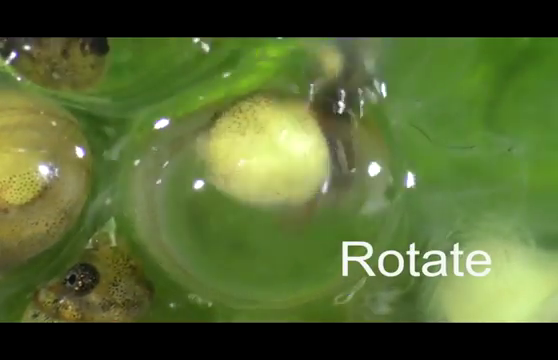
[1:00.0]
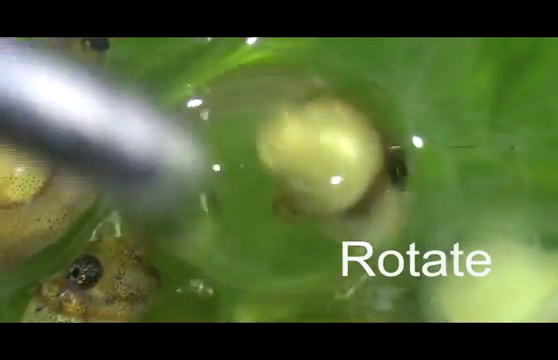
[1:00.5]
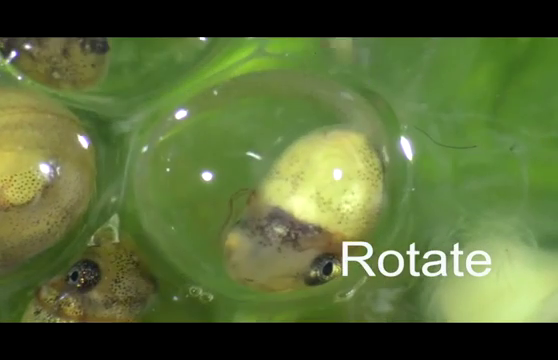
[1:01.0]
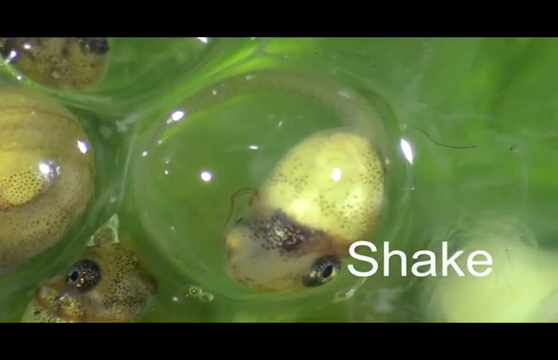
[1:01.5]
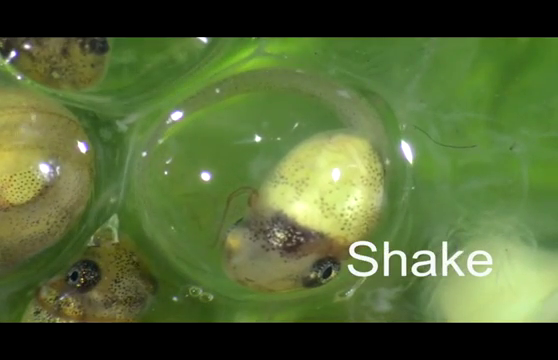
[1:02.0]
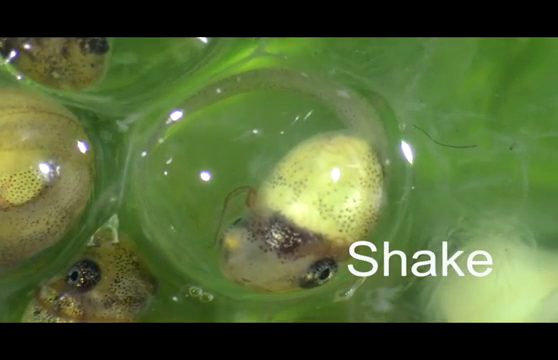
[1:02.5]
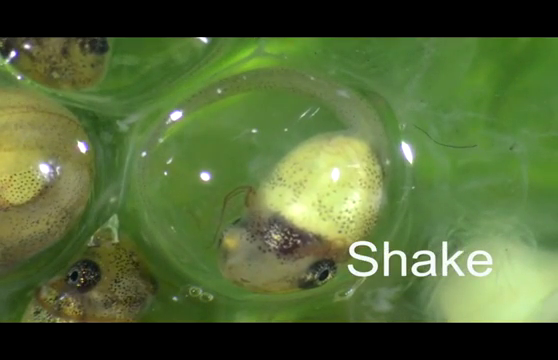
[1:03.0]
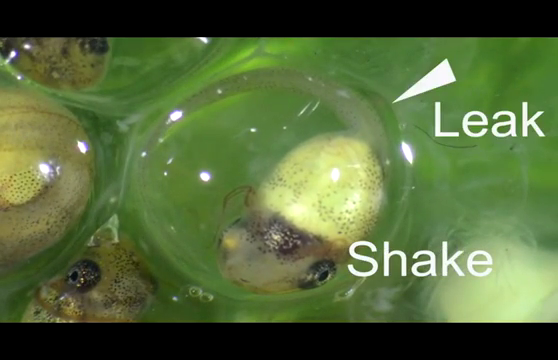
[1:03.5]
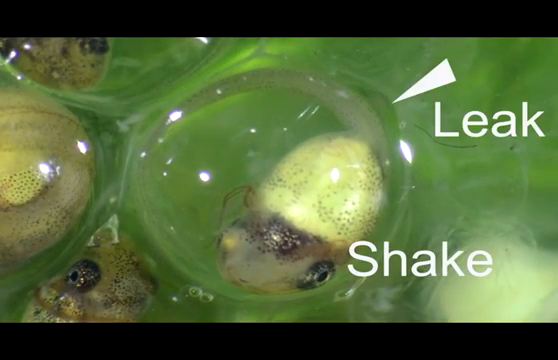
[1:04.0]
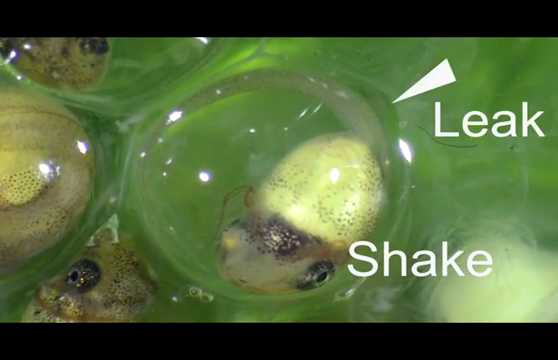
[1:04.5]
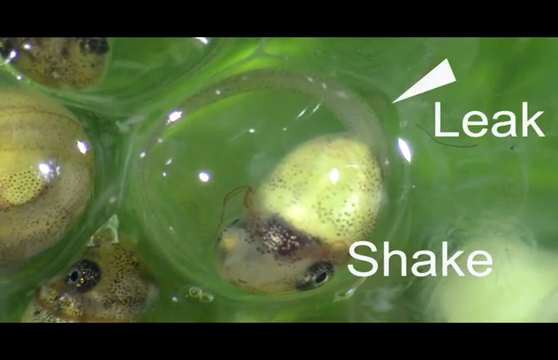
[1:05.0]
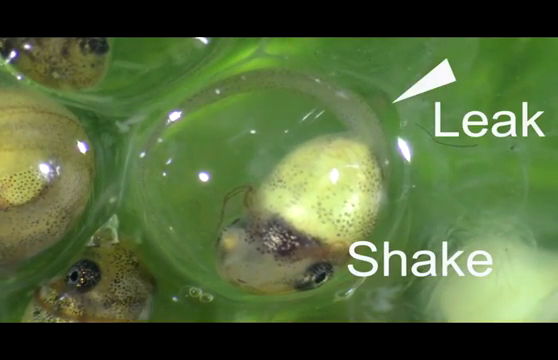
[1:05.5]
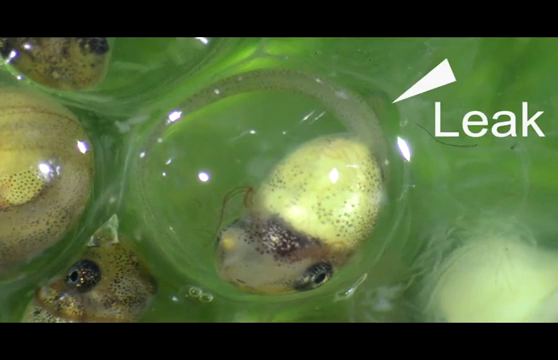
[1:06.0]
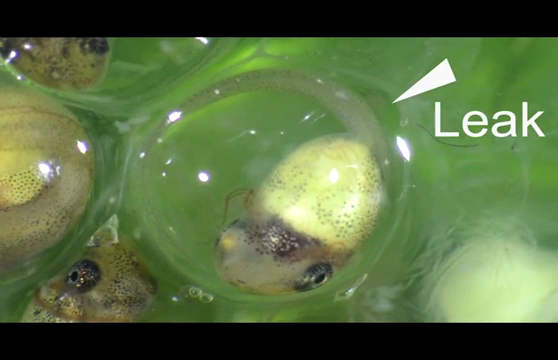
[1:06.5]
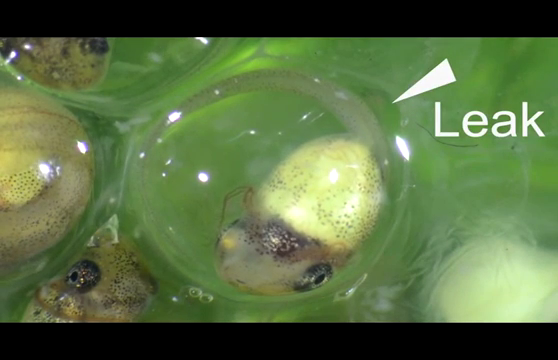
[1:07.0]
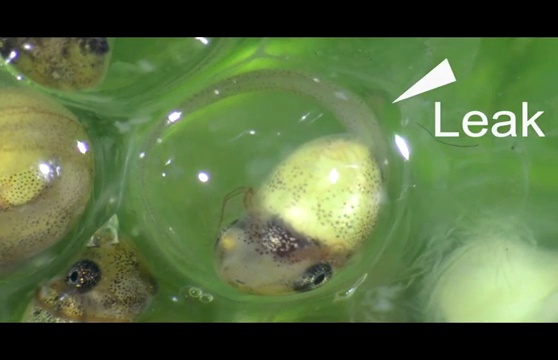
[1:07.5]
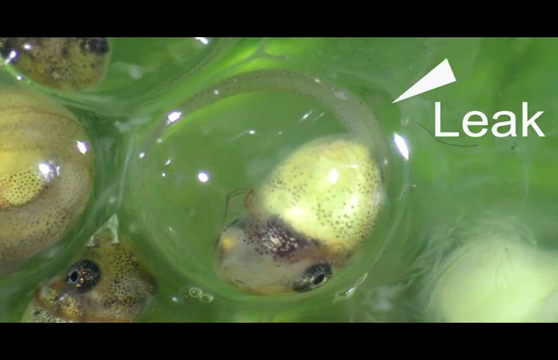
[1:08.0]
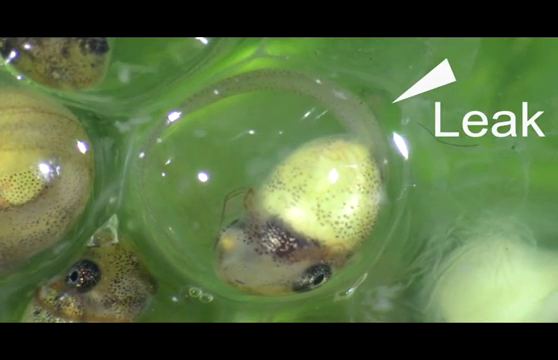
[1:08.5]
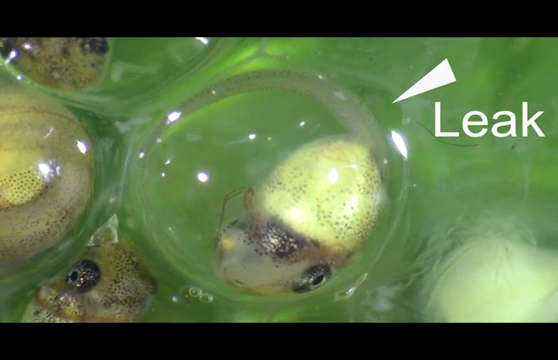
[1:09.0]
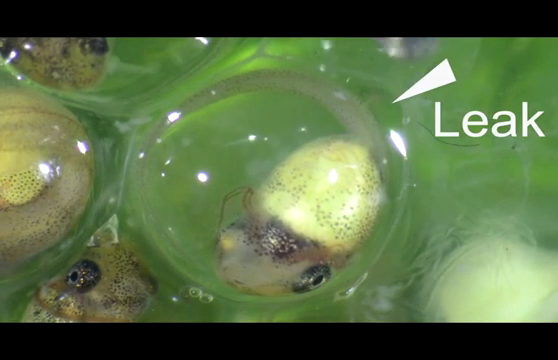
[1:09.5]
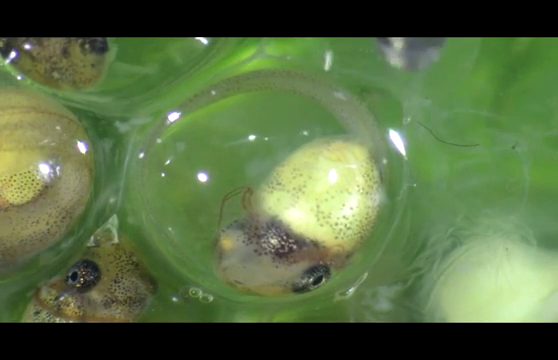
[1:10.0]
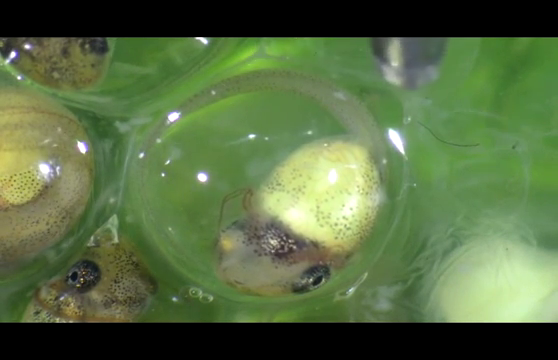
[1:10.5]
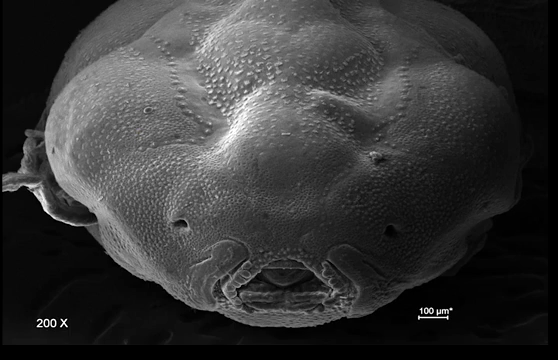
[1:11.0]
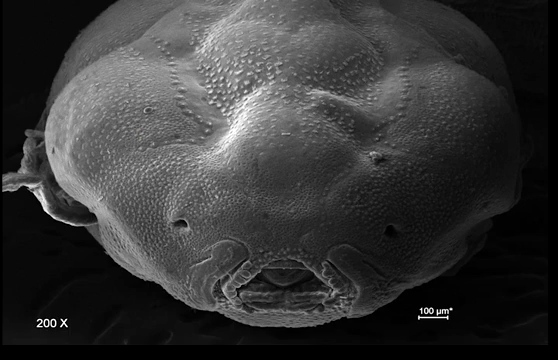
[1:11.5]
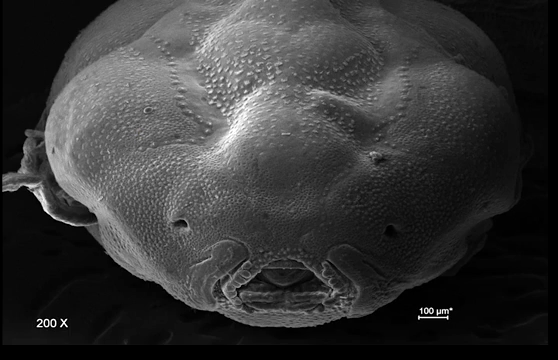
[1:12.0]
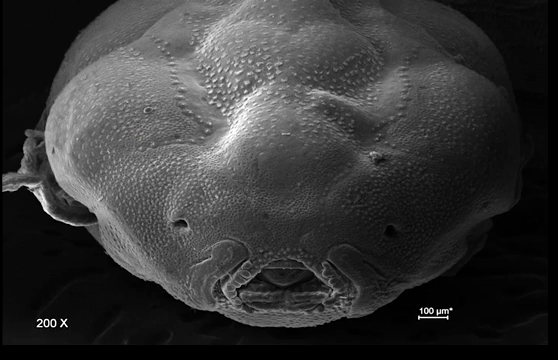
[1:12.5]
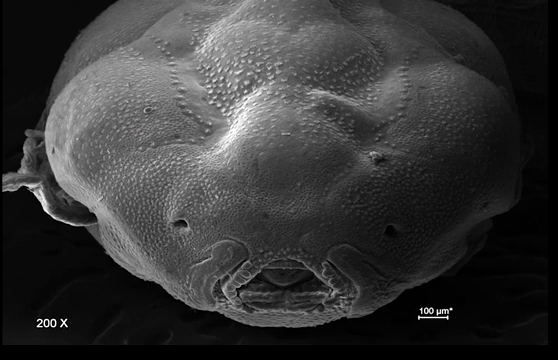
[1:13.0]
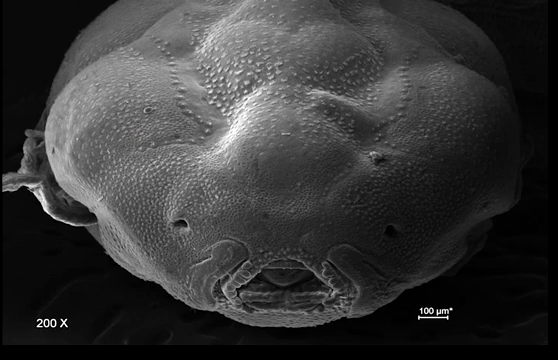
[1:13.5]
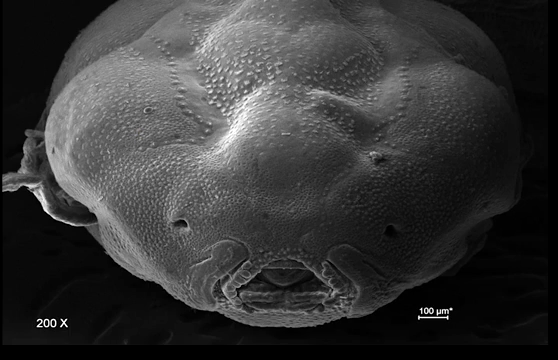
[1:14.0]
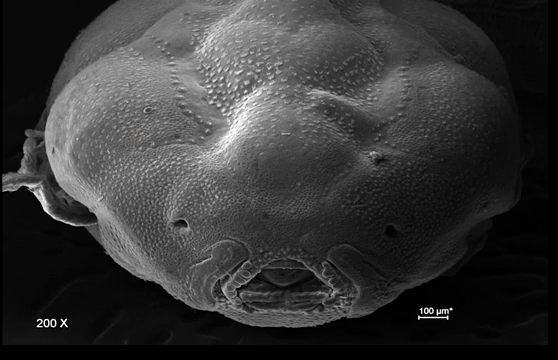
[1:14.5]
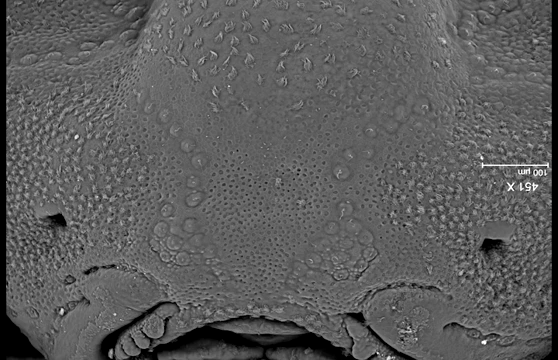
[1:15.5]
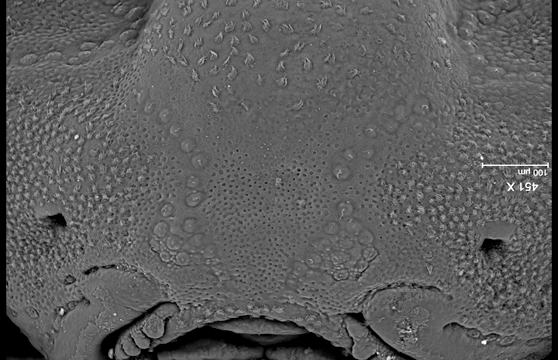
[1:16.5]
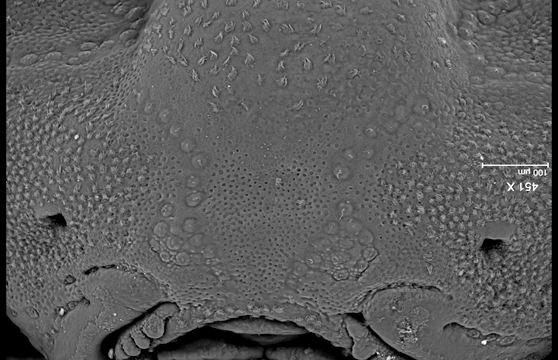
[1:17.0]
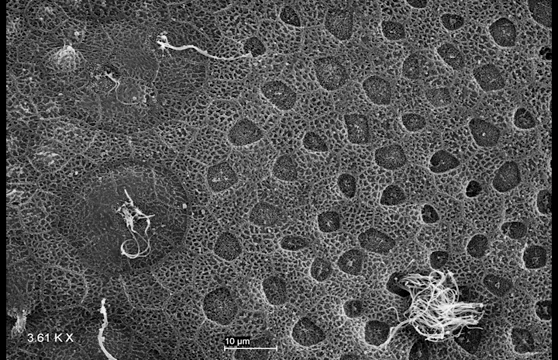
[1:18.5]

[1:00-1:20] A close-up view shows embryos: one complete embryo and portions of about three other embryos on its left side. A word in white text in the lower right corner reads "rotate", and the embryos are stirred with a rod to rotate them. Next, the word "leak" appears with an arrow pointing to the full-sized embryo, and the egg sac seems to begin to leak. A black and white, or more like grayscale, image follows, and the image zooms in. It shows what looks like the rough surface of some kind of organism, with pores and holes in various patterns, looking like something captured under the lens of a microscope. The screen changes to a different organism with different patterns on it.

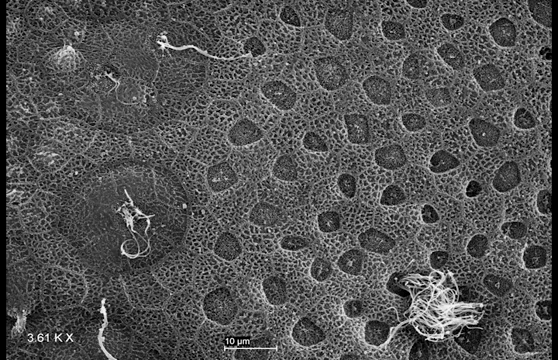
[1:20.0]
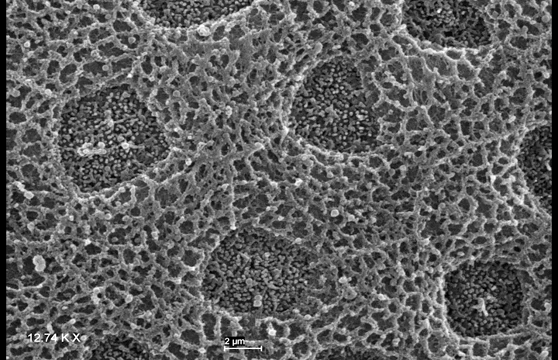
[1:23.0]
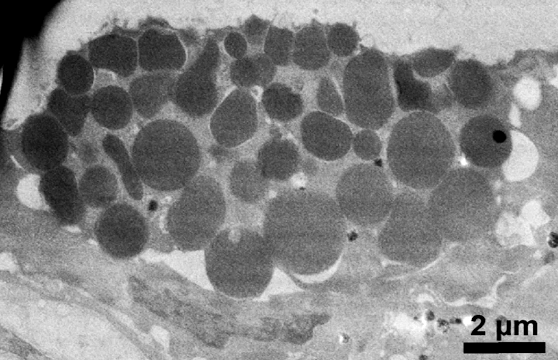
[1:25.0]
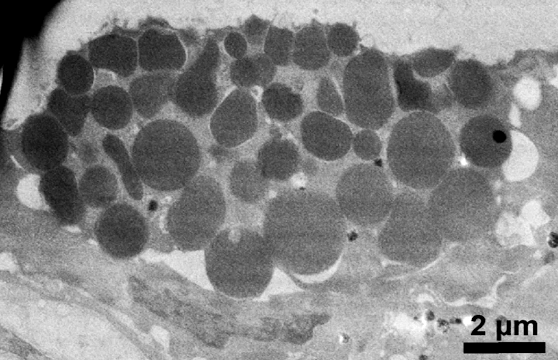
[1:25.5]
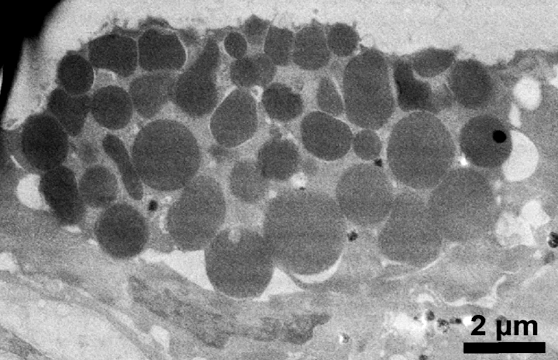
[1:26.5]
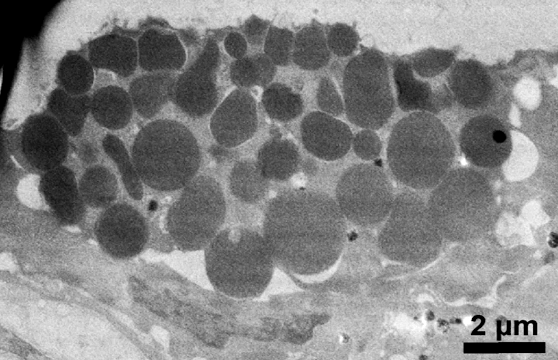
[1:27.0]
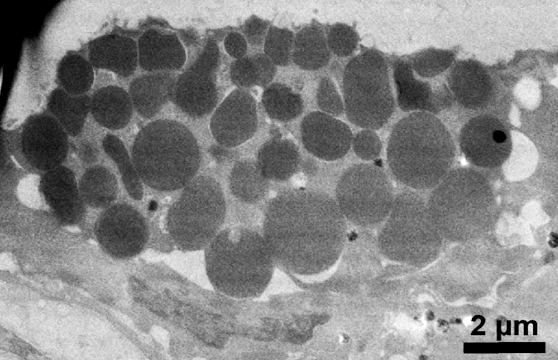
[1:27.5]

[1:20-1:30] An image looks like something viewed through the lenses of a microscope, showing cell organisms with patches and some circular markings on them. The screen changes to a closer view of more organisms, which have a sort of patchy pattern with circular patches of darker grey. Another view of the organism shows lots of circular forms clumped together in darker grey, compared to the lighter grey of the rest of the organism. The patches are uncountable, especially on the circular one shown later, which seems to have close to a hundred circular forms or patches in different sizes, along with blotches in a lighter shade.